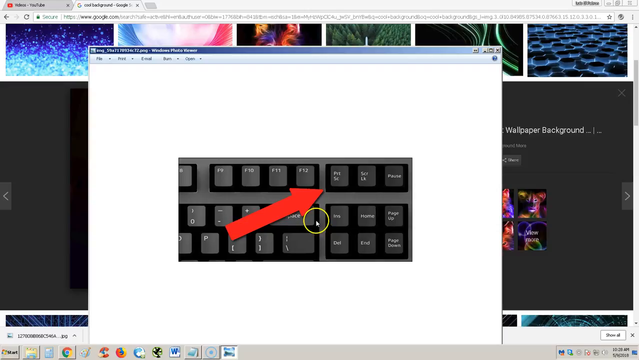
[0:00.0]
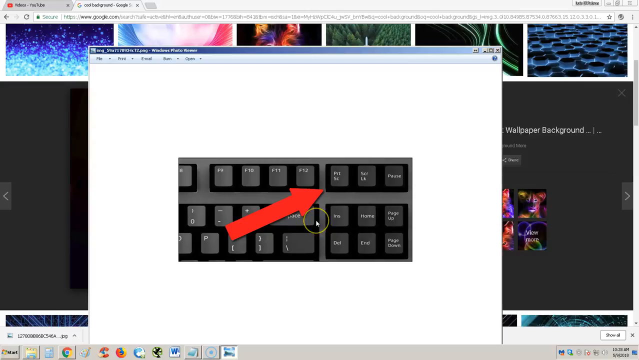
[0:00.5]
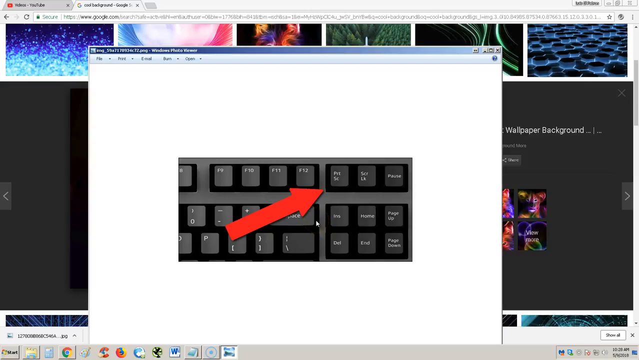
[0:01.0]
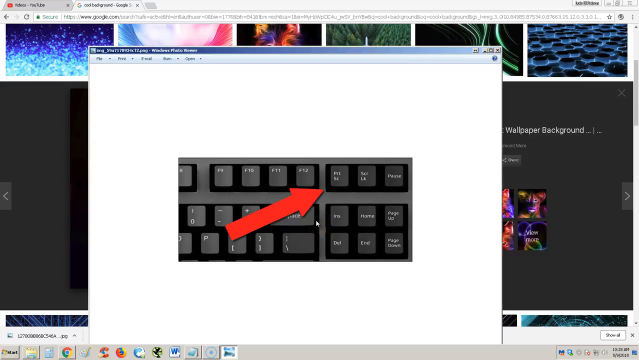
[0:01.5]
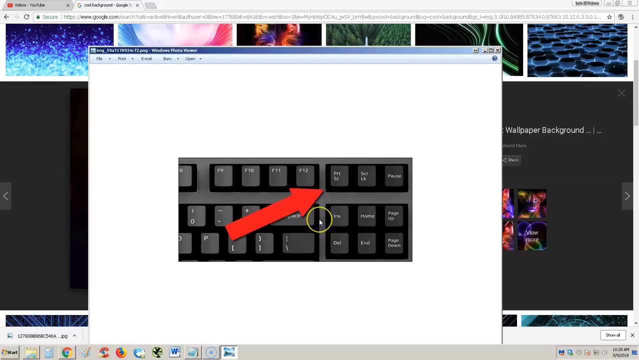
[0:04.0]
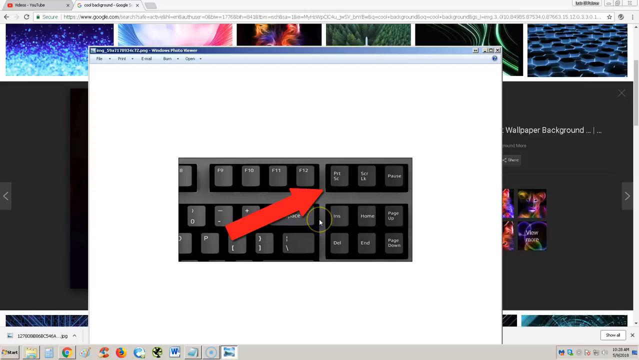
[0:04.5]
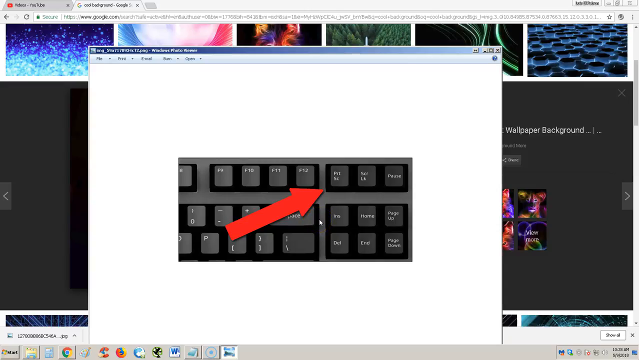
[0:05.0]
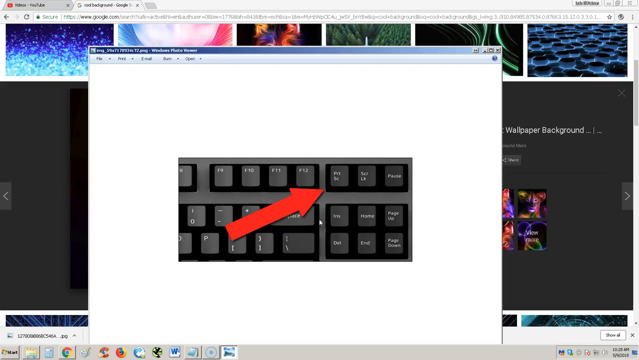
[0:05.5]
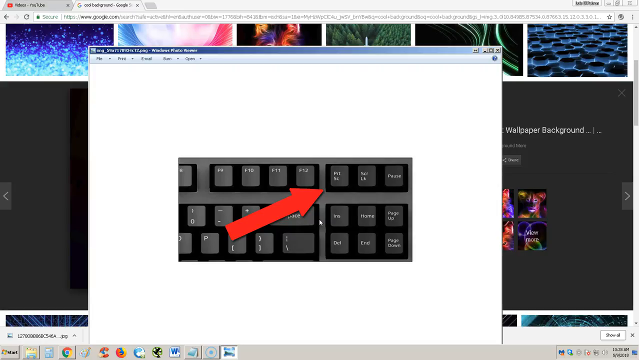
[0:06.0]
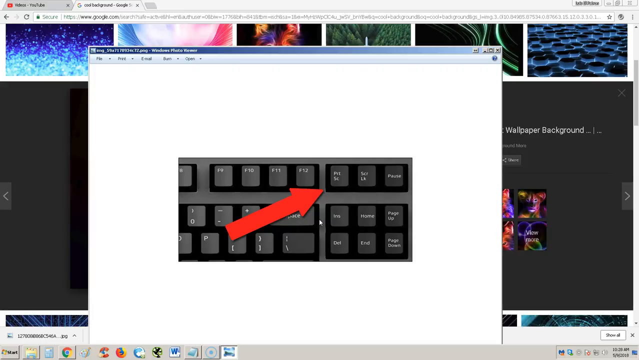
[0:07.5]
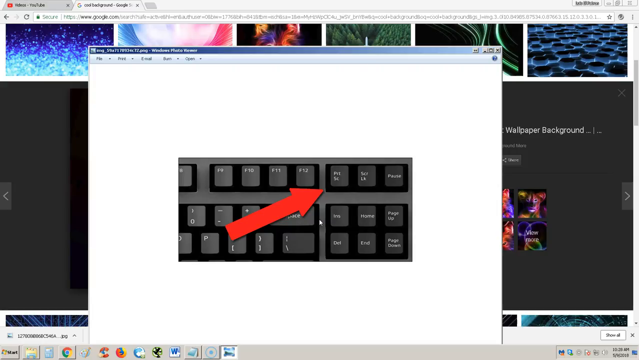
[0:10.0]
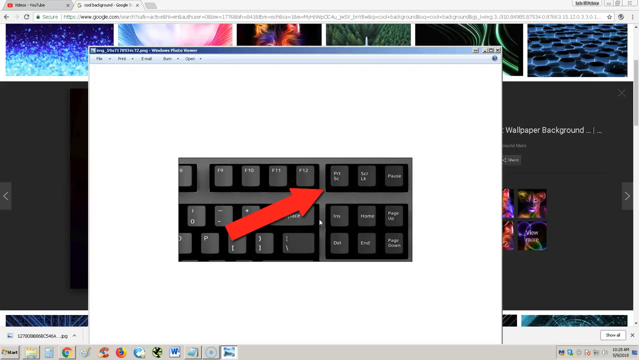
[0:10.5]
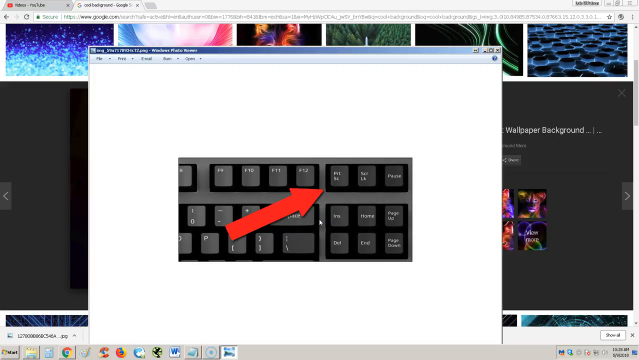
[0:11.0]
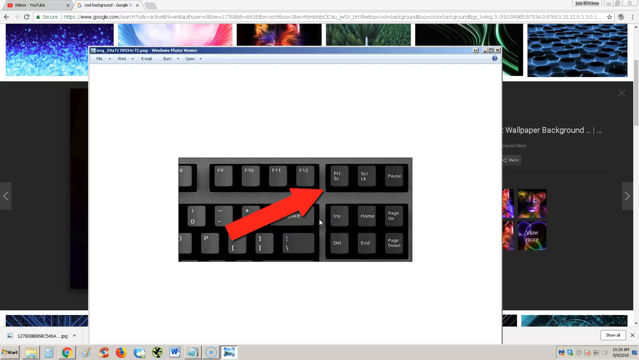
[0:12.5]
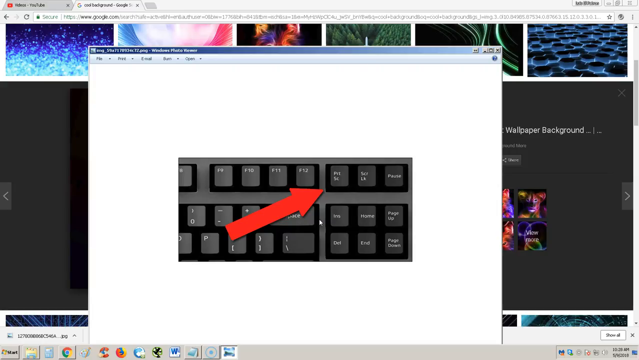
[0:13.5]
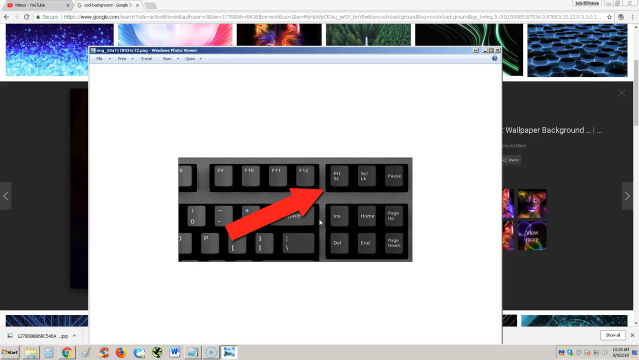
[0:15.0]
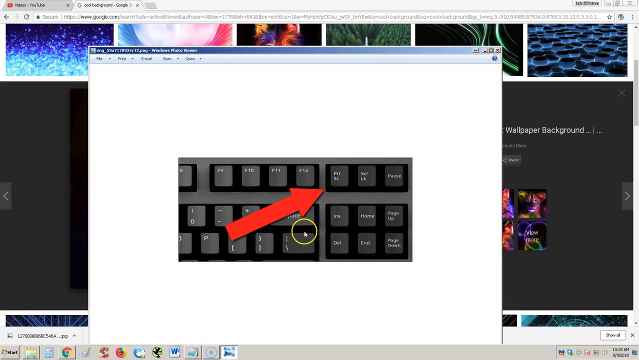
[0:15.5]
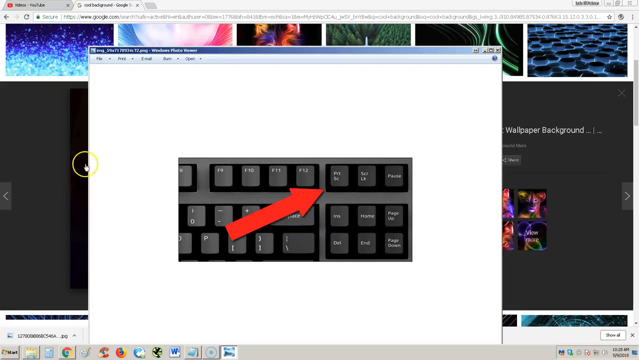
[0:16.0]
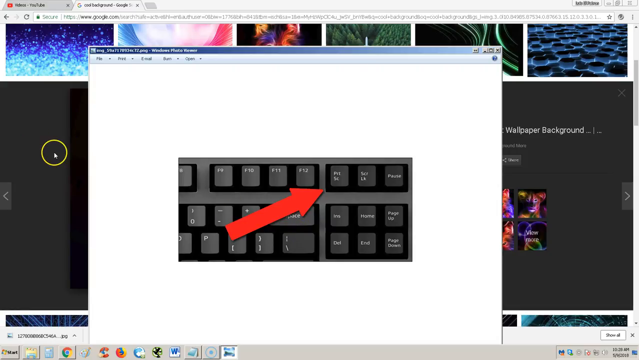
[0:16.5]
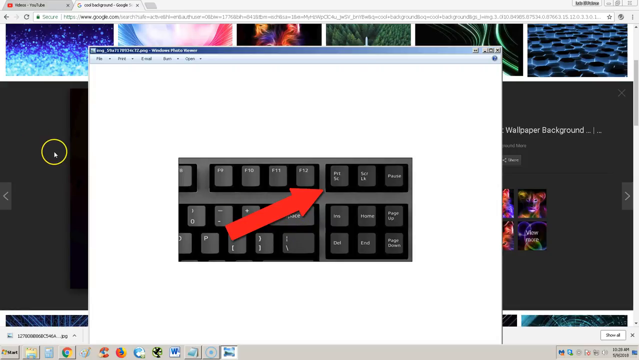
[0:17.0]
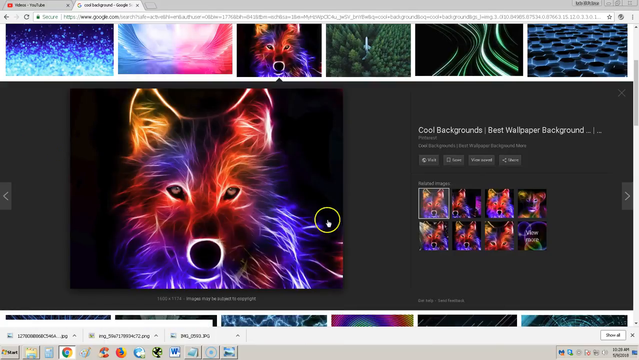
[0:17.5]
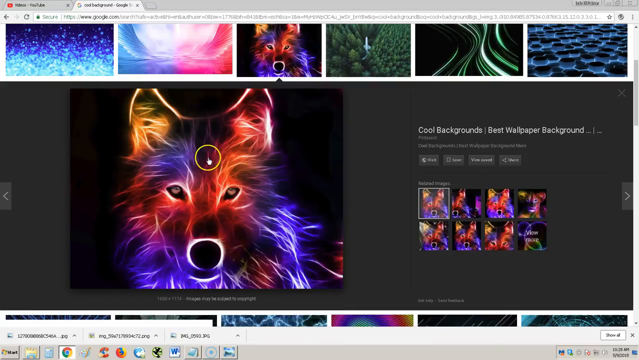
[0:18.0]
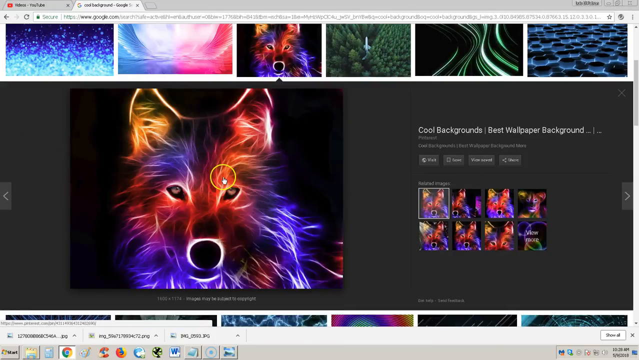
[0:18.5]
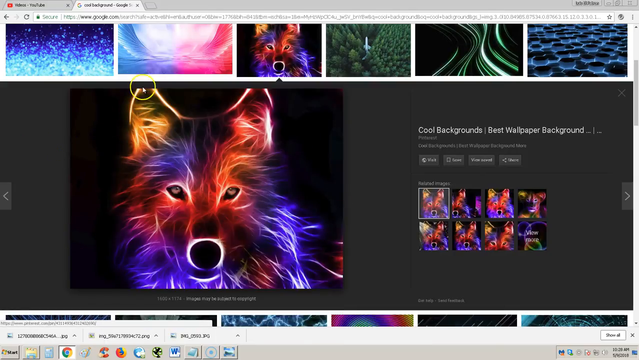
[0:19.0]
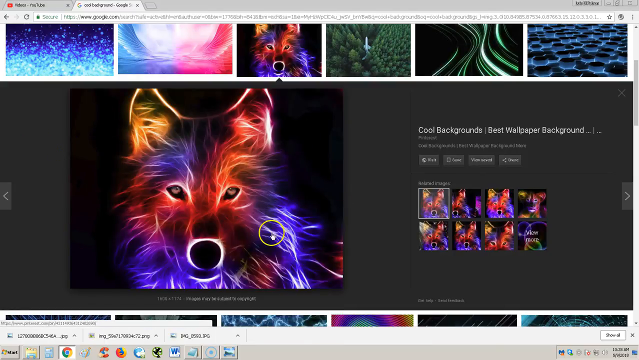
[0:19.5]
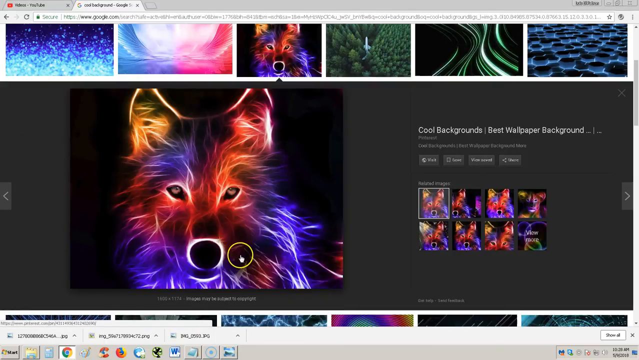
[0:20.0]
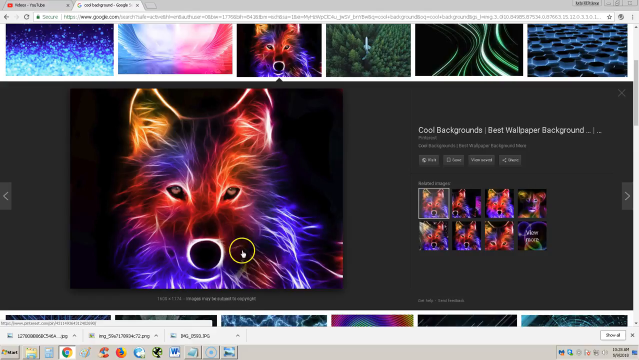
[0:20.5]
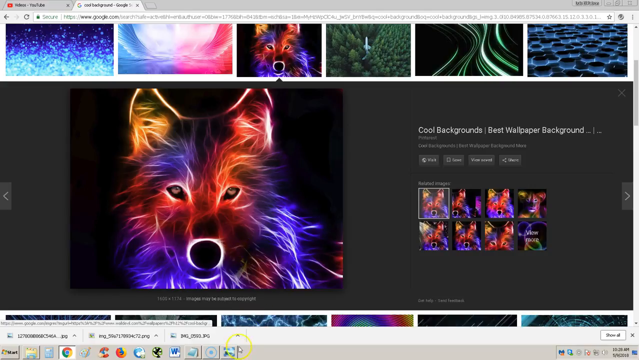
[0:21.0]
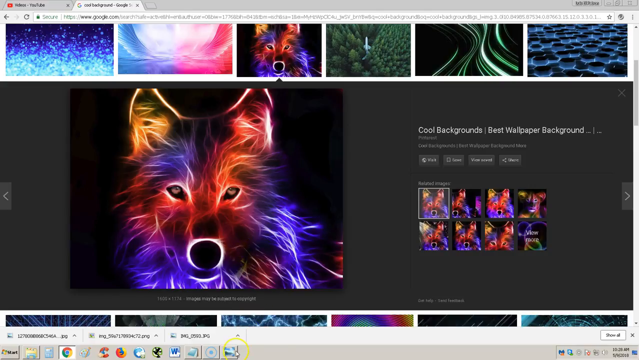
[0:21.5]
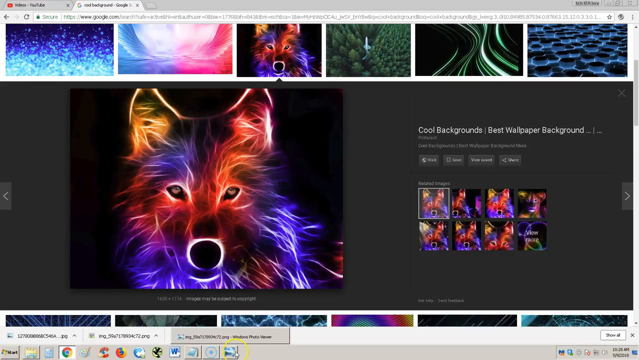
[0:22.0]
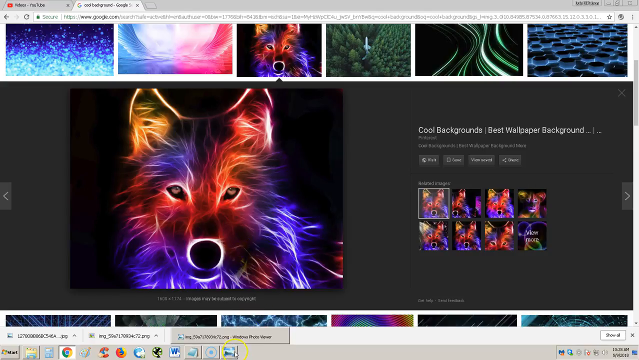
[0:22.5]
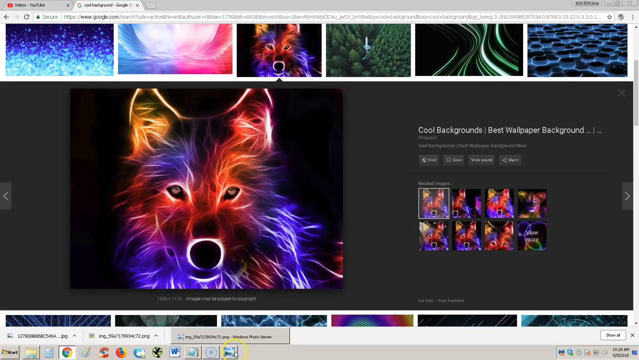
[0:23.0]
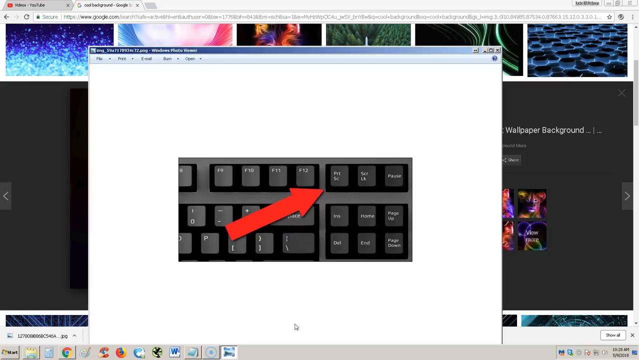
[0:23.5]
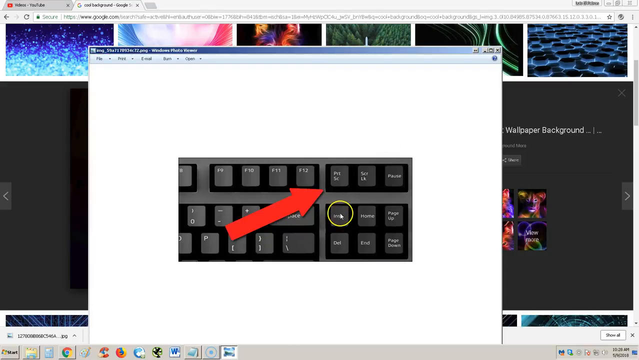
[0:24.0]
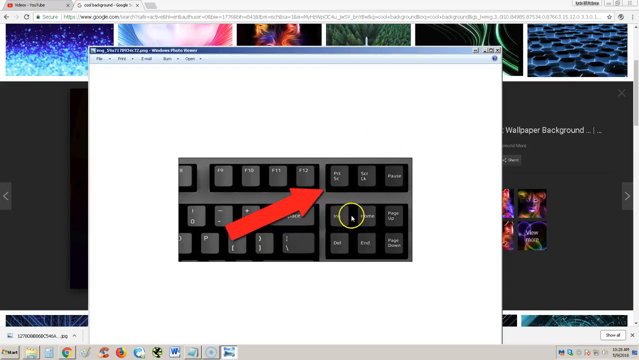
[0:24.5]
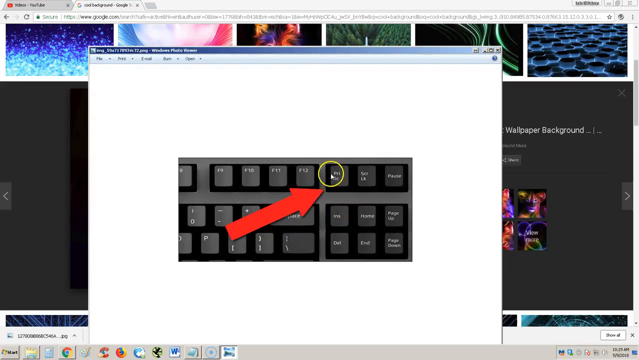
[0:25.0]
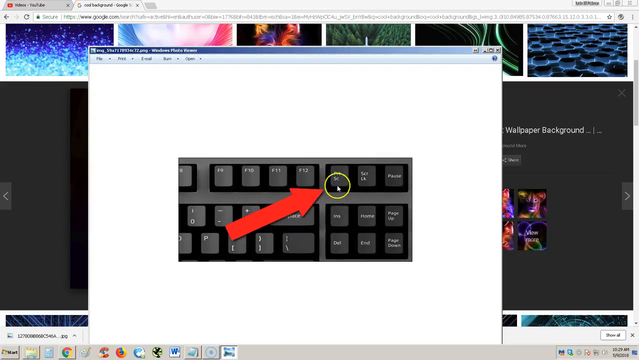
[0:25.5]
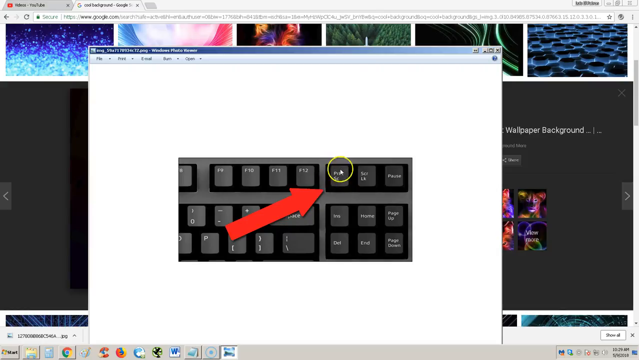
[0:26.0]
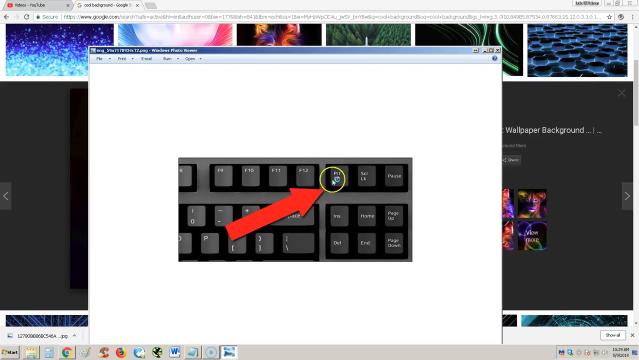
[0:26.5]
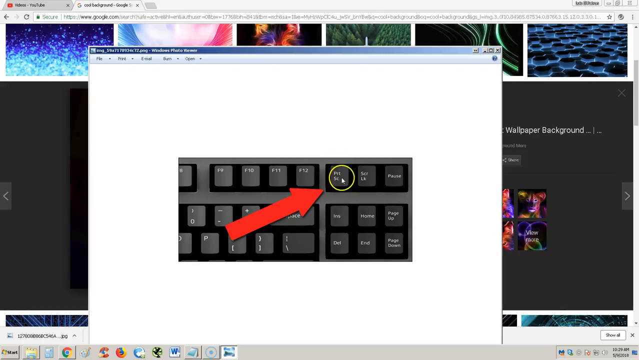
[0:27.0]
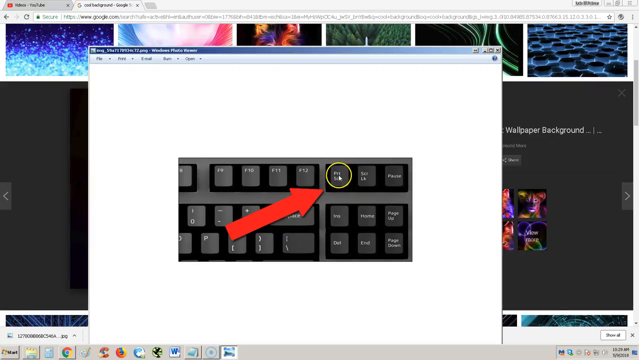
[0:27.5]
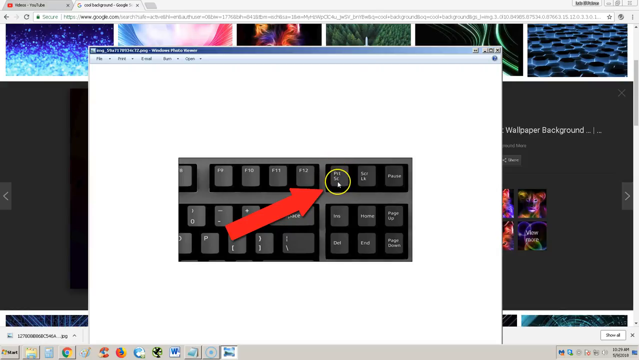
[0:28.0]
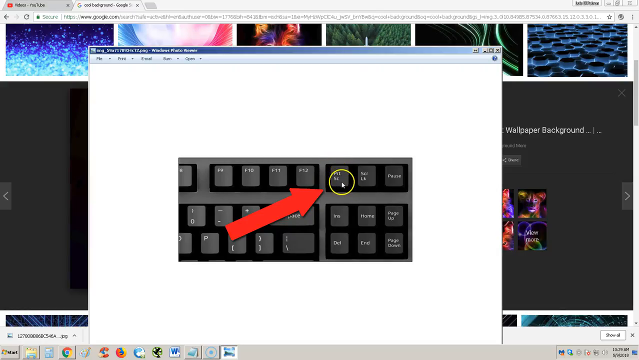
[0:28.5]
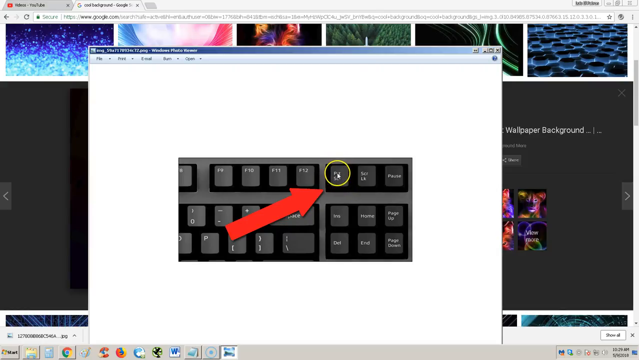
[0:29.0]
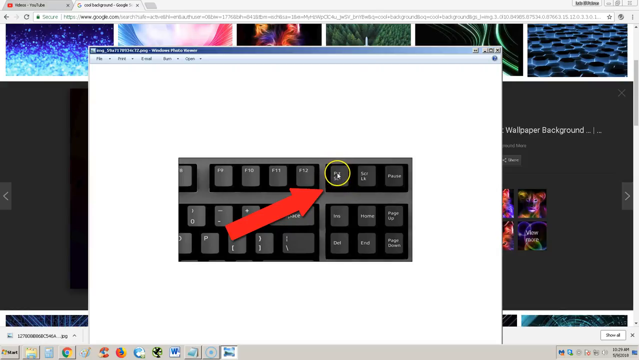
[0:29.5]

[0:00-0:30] A red arrow points to the print screen button of a keyboard in a zoomed-in, cropped picture shown within the screen of another screen. A finger-shaped cursor with a yellow circle clicks out of that, and a wolf appears whose hair is lit up in different colored lights, illuminating it. The cursor goes in circles around the wolf's face. A strip of pictures runs along the bottom, and the right side says "cool backgrounds, best wallpaper background" with different versions of this wolf picture. The cursor circles the snout and nose area again, then clicks something at the bottom of the screen, and the same keyboard image shows up. The cursor hovers over one of the buttons above Delete, then goes in circles around print screen and points at it again.